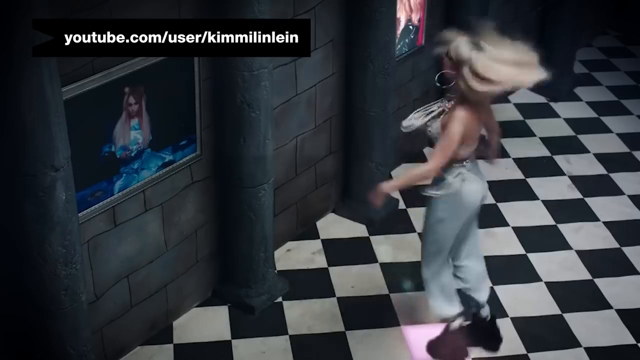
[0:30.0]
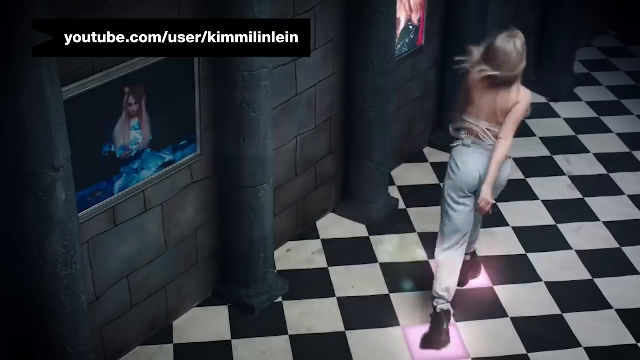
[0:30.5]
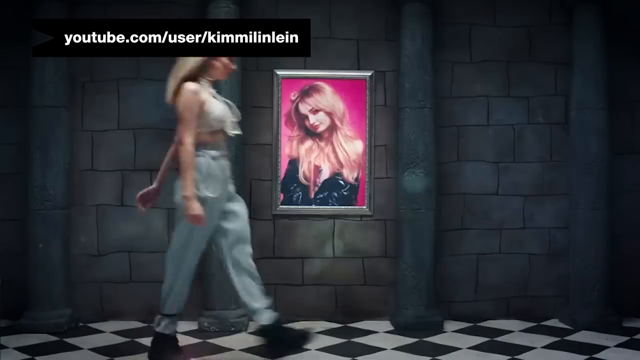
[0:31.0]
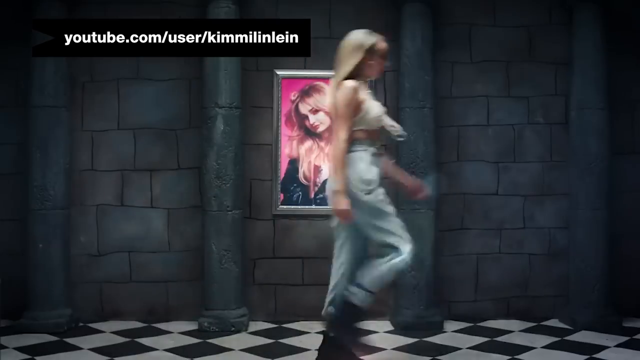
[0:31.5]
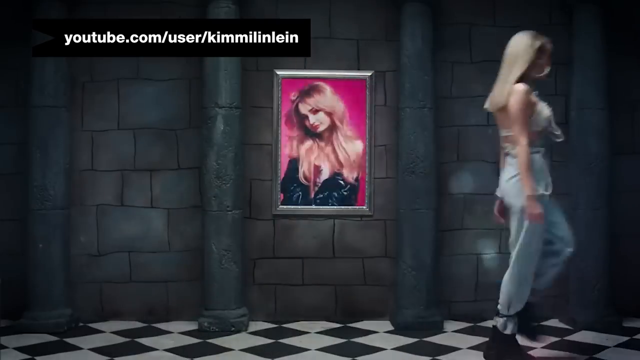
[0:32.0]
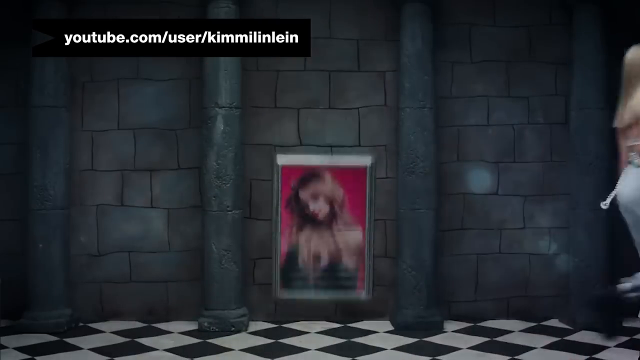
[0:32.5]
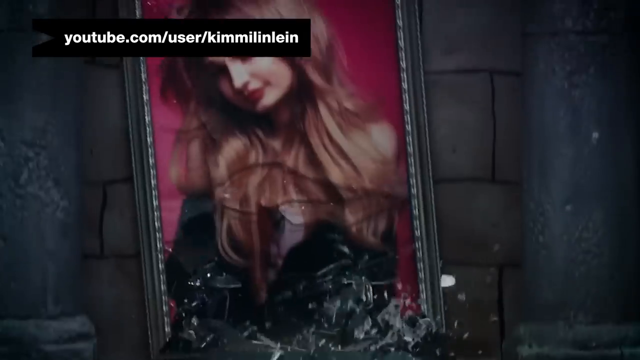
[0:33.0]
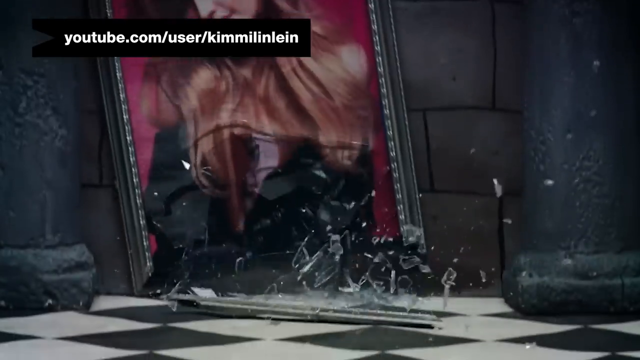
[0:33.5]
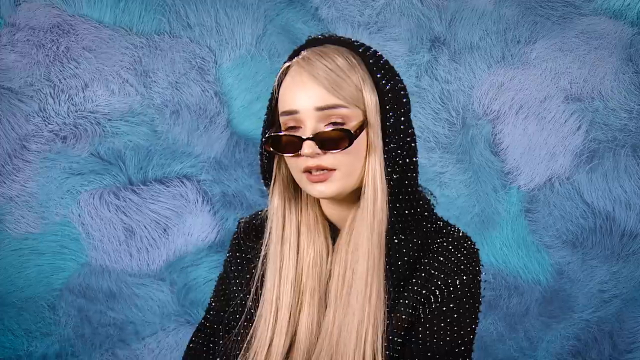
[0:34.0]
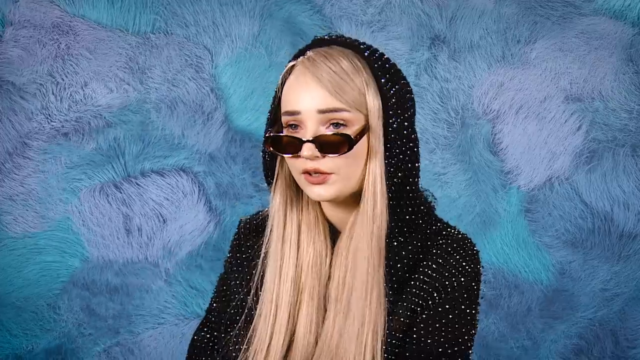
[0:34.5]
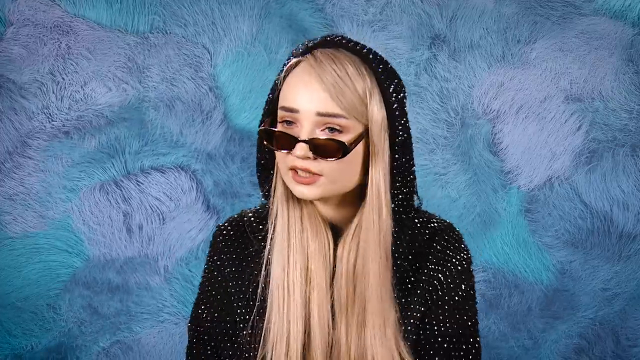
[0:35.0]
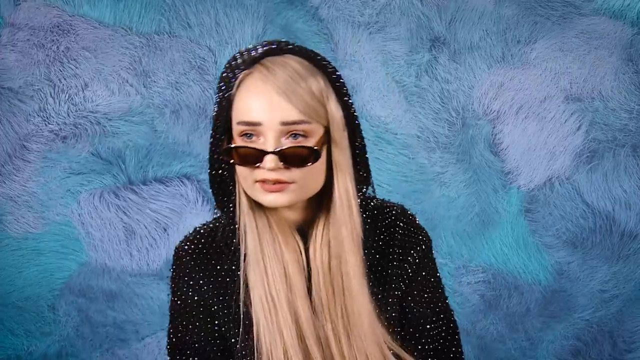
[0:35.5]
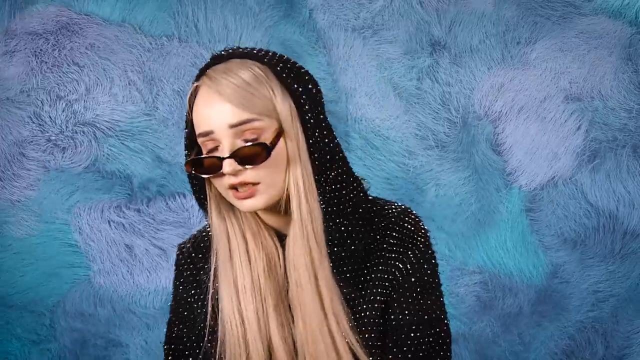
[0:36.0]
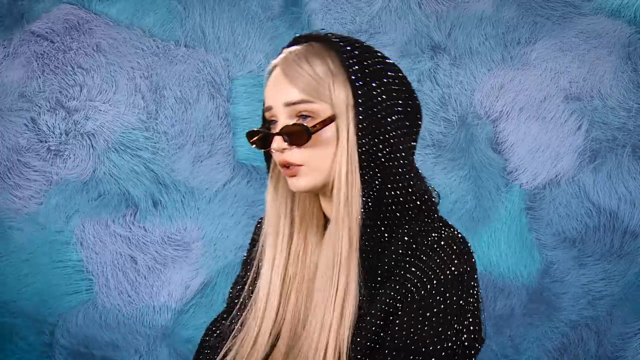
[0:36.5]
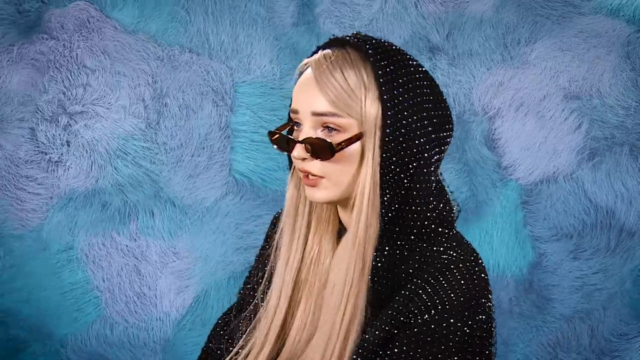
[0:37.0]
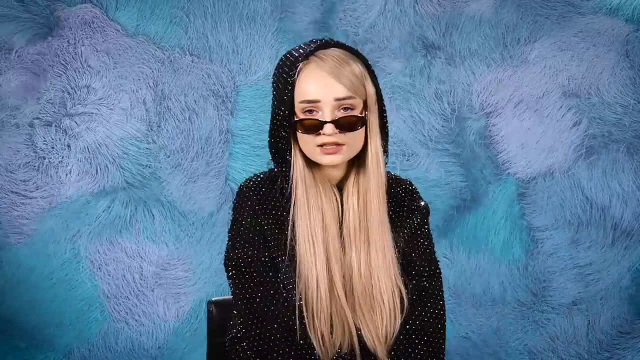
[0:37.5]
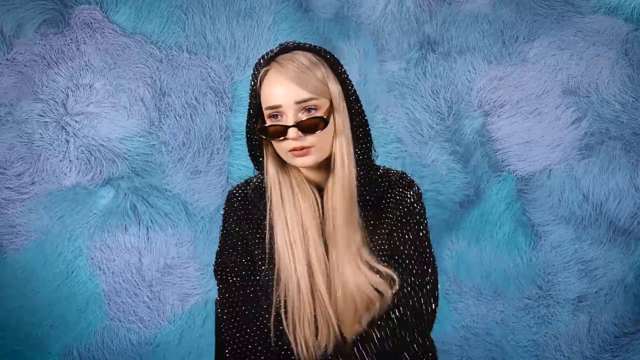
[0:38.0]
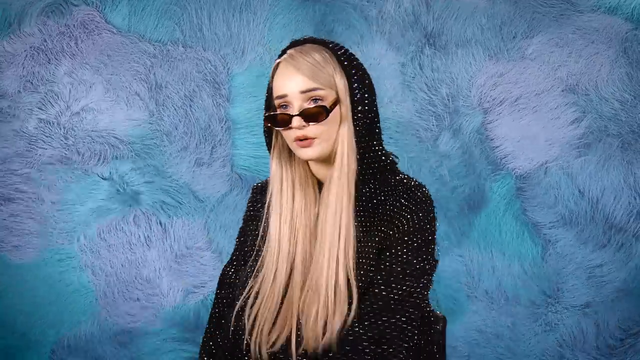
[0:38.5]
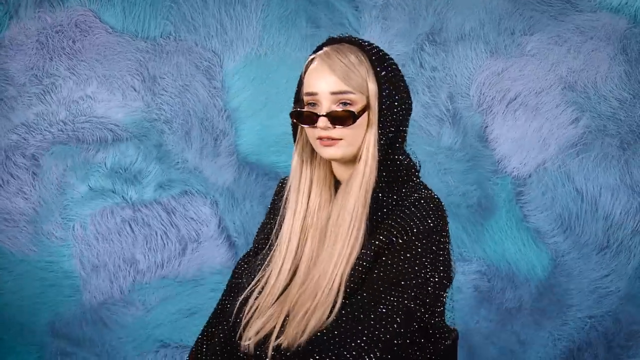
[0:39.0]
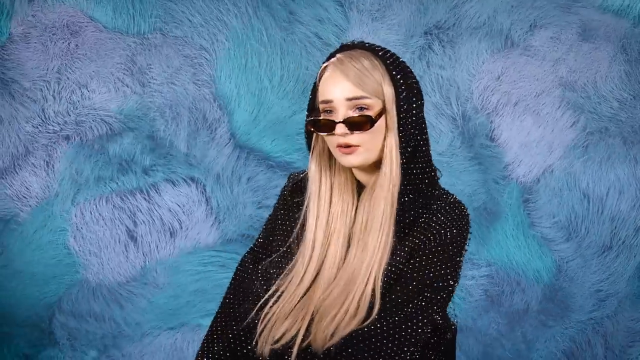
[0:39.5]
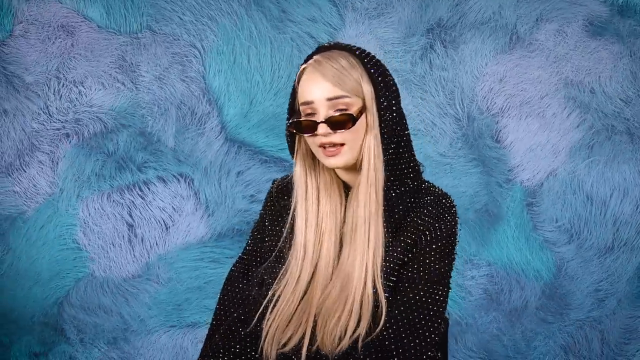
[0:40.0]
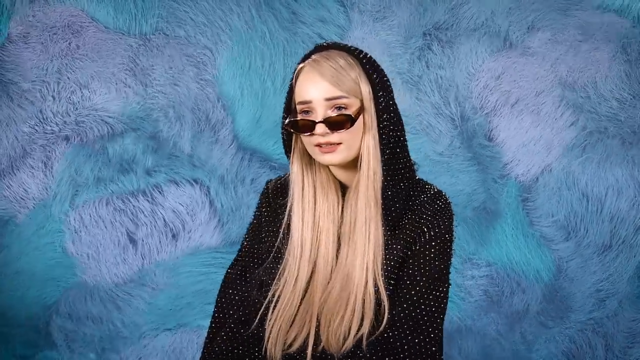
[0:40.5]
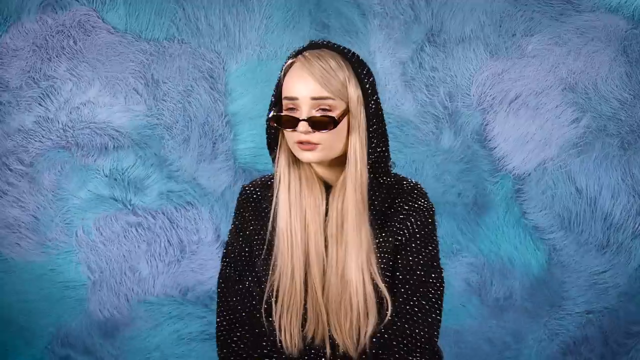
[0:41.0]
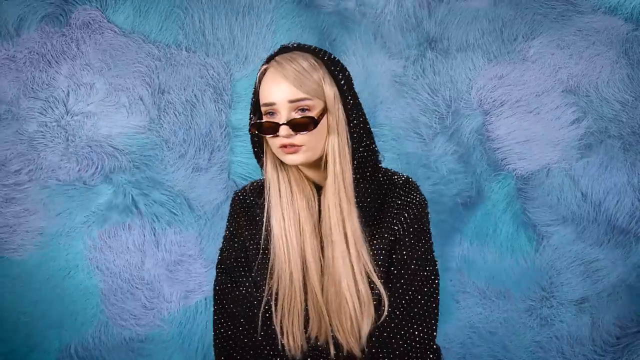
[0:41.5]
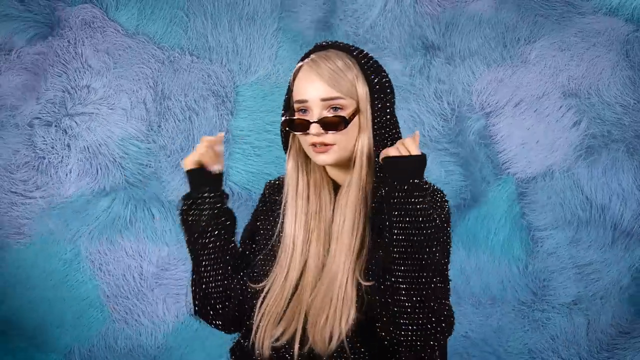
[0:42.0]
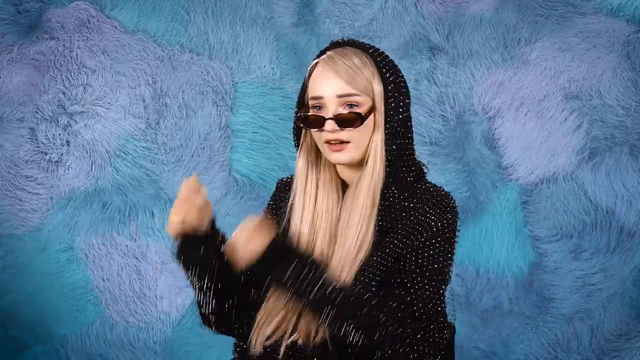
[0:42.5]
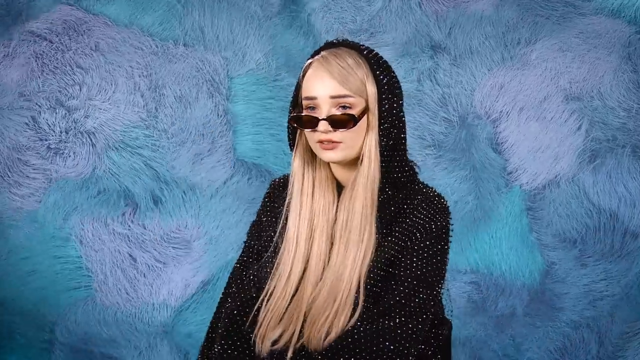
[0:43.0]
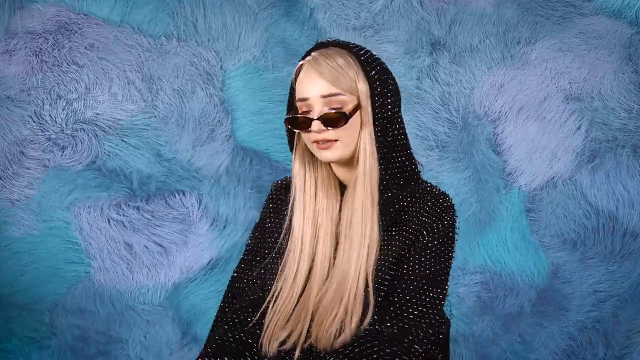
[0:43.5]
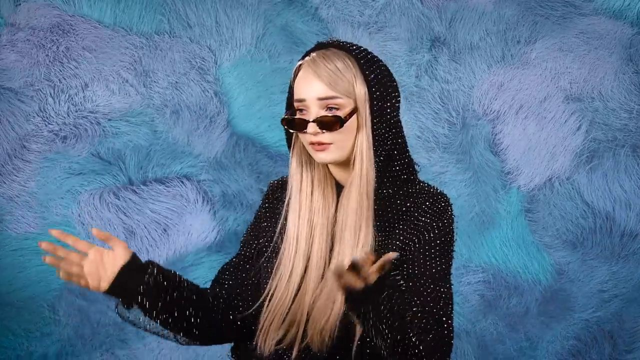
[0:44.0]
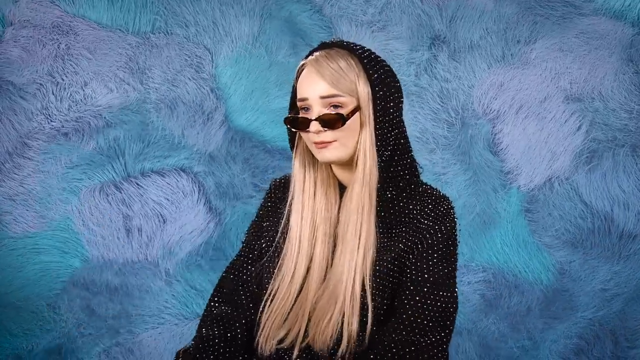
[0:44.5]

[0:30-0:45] One person, with long blonde hair and brown sunglasses and wearing a black jacket with sequins, sits in a black chair, kind of swinging around in it, with occasional close-ups, and talks throughout. The background is light purple and light blue and looks almost like it is breathing. Cut in with this is another clip of the person twirling and then walking away while a framed photo falls and shatters, its glass falling to the floor. In that clip the floor is black and white checkered, and the person wears a white top, long gray sweatpants and boots.